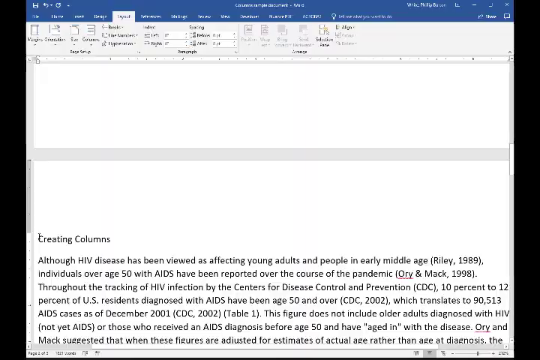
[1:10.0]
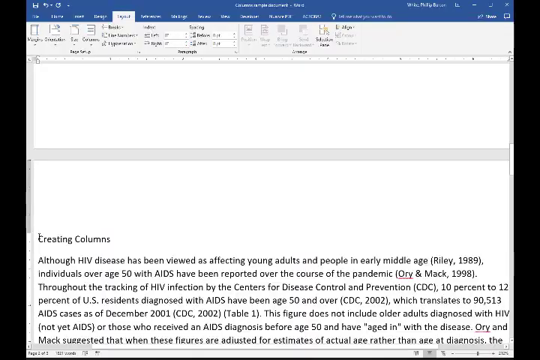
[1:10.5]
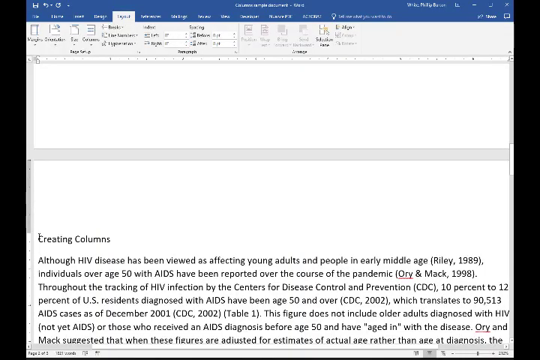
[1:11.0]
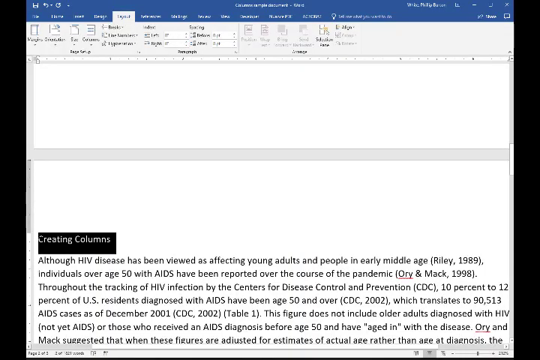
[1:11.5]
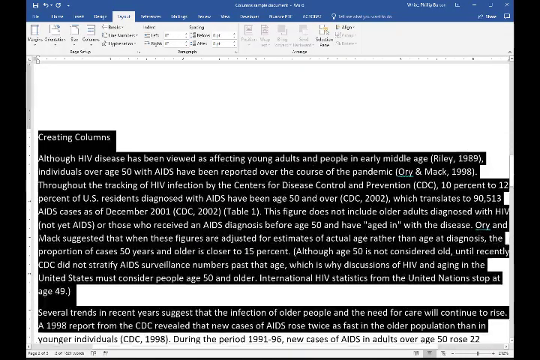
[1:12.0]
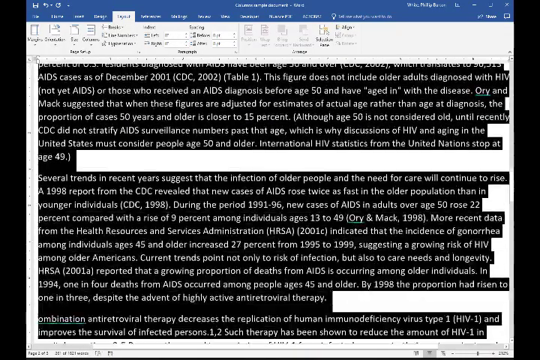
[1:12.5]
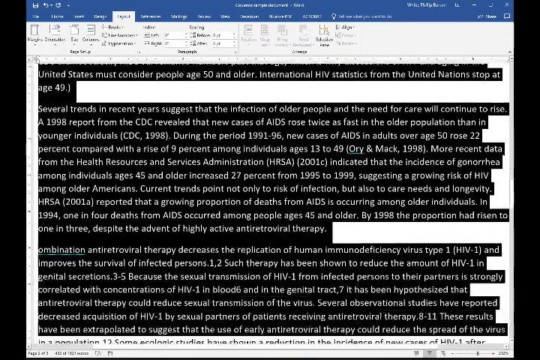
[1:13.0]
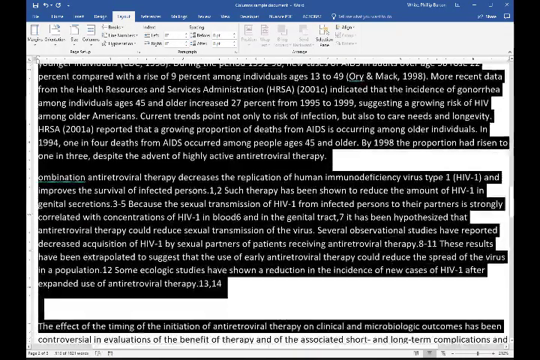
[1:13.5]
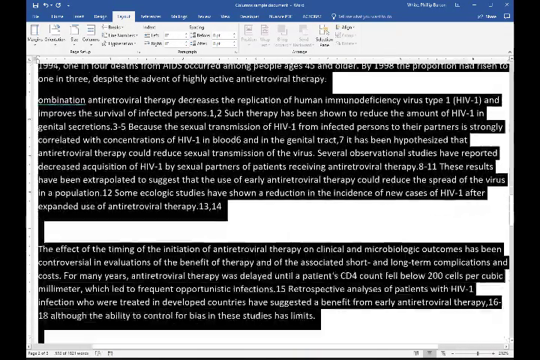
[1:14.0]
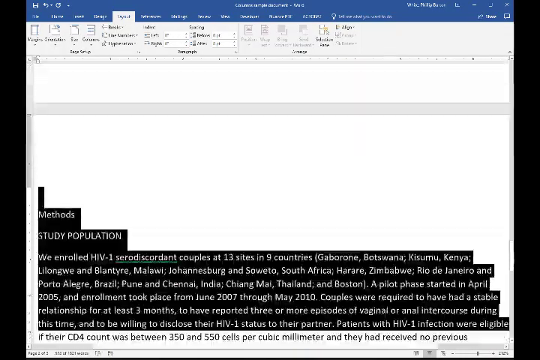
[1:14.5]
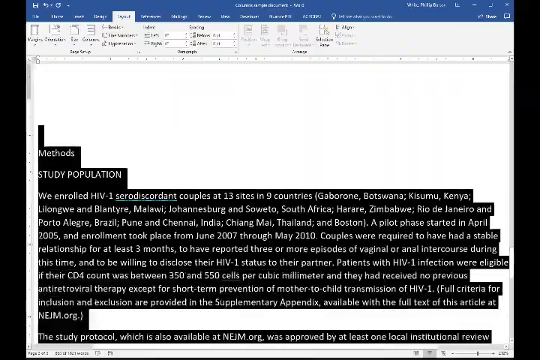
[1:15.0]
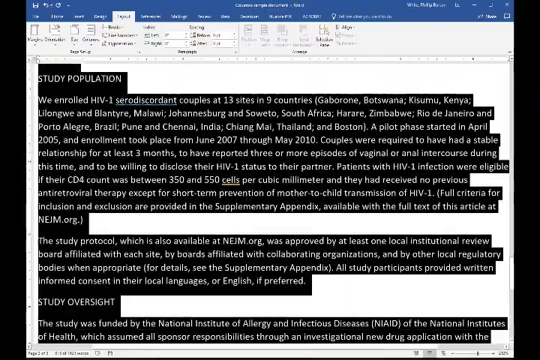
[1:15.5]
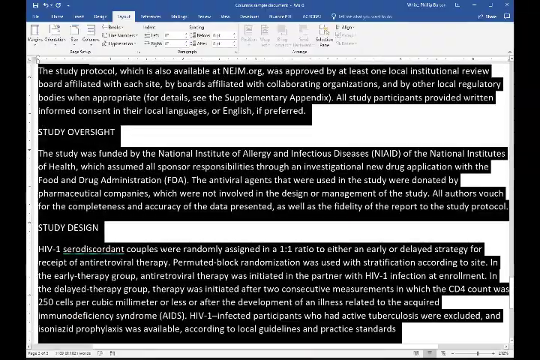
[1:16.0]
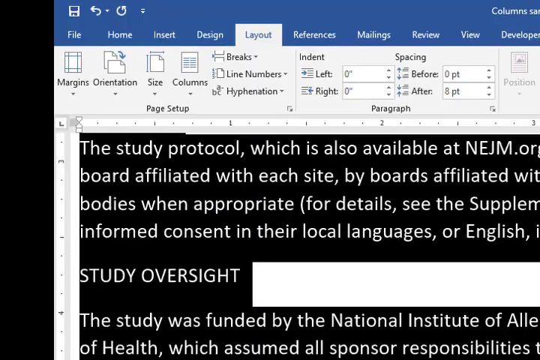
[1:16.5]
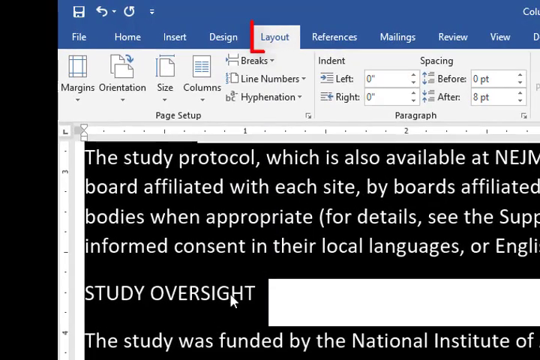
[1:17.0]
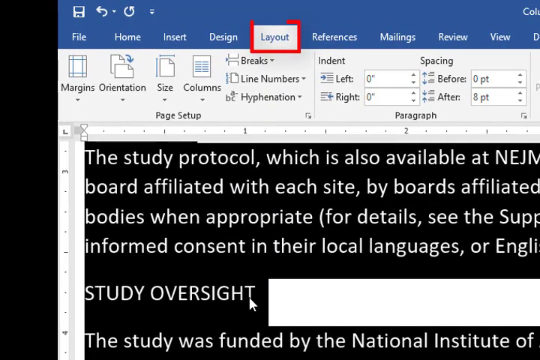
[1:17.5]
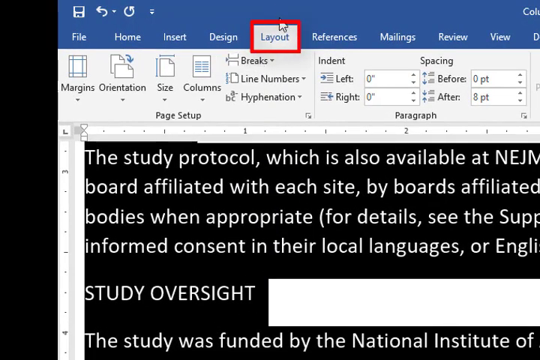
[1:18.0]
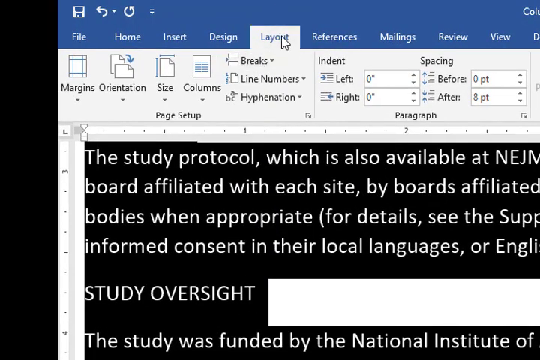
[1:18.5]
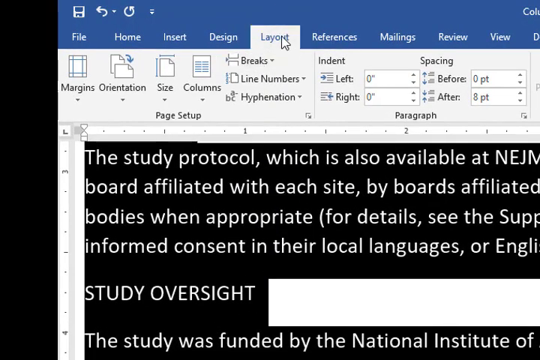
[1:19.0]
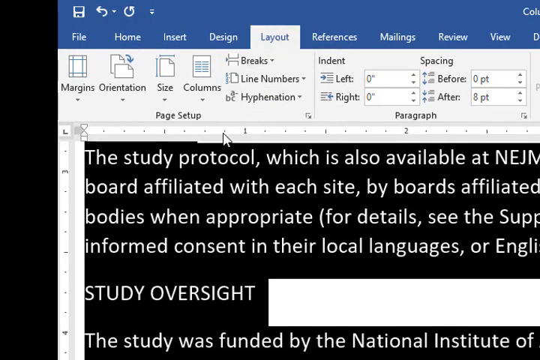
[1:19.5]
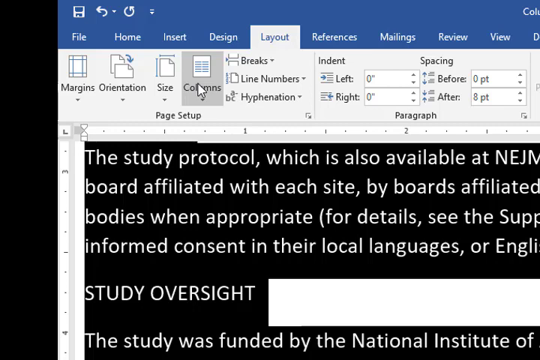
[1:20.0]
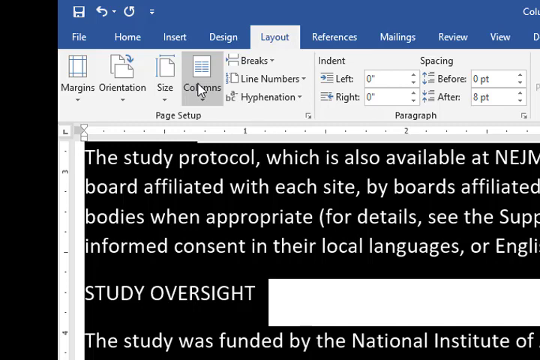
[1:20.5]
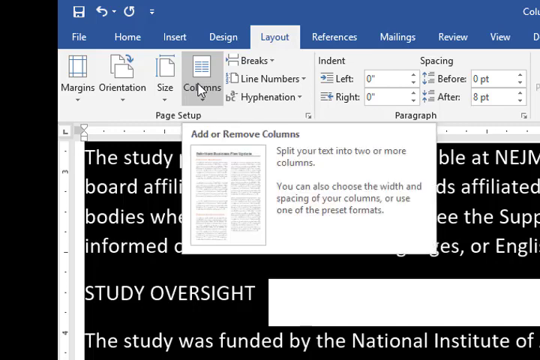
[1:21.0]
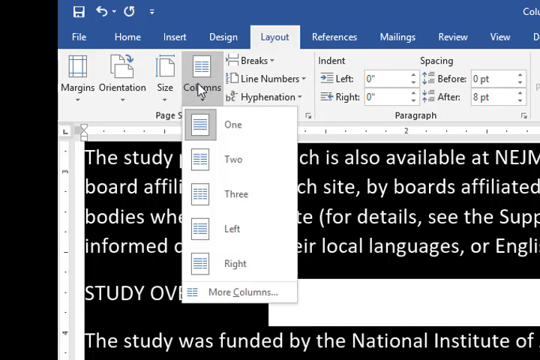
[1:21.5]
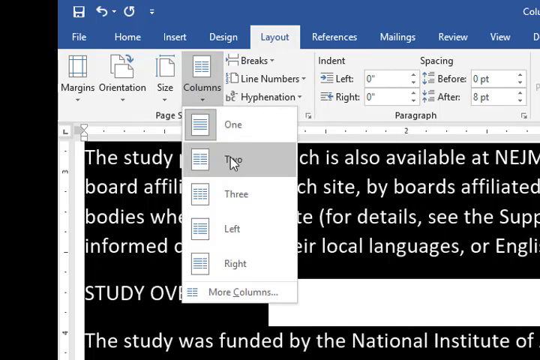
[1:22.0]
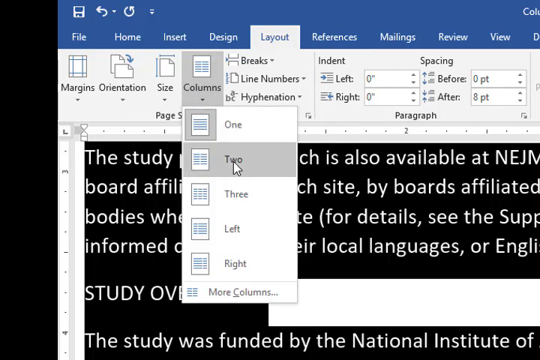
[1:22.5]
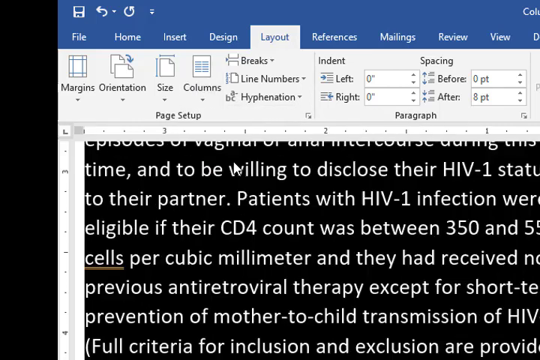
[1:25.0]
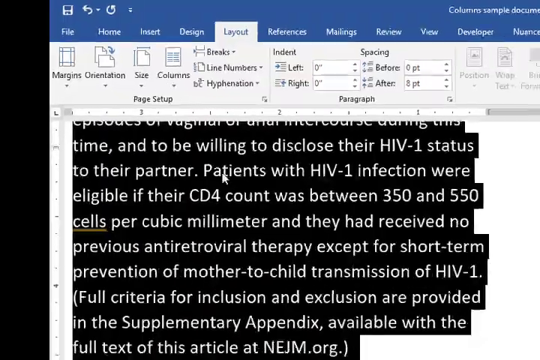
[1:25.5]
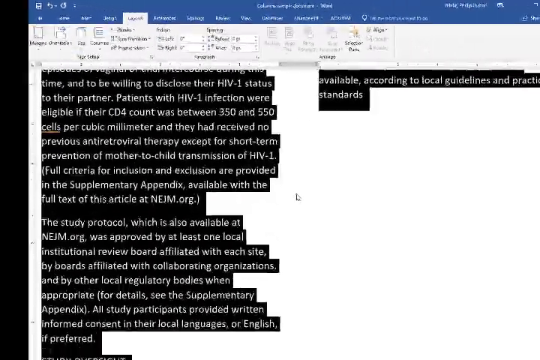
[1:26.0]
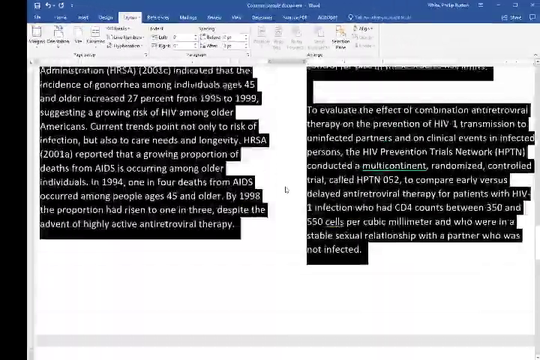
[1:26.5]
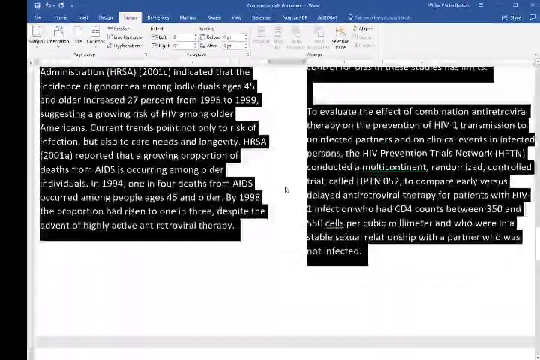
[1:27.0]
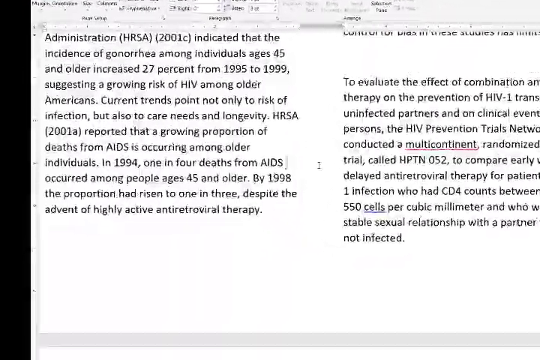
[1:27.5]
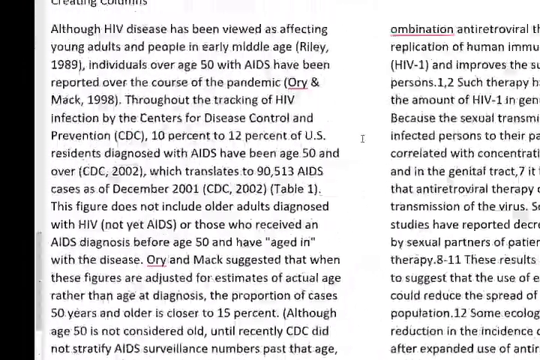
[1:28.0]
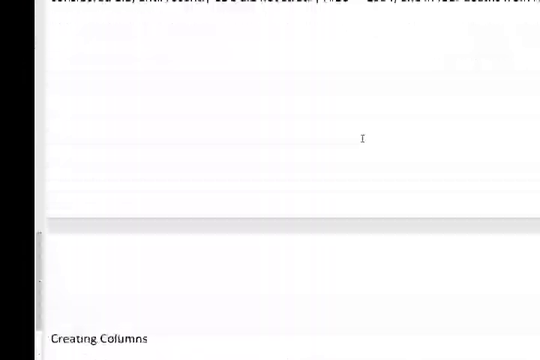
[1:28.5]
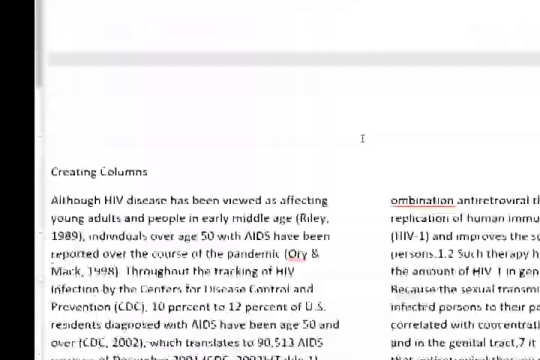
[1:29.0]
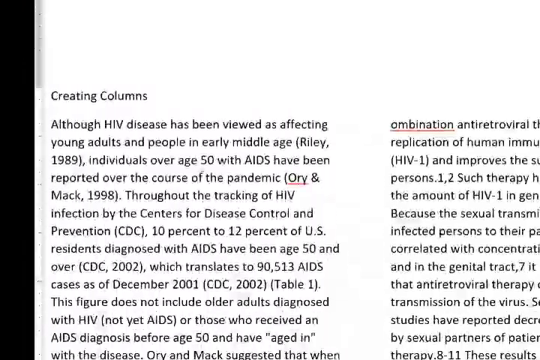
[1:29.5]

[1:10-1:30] A zoomed-out, full-screen screen-share view of the MS Word document appears, with the blue header at the top containing items like the file menu and a toolbar menu below it that is difficult to read at this resolution. There are black columns on the other side of the screen, letterboxing style. A page break runs across about the middle of the screen, followed by a section about creating columns; the text below looks like dummy text used for a paper about HIV. The mouse highlights this text, setting it in black. The view then zooms in, showing MS Word on the layout tab, with options beneath for margins, orientation, columns and so on. The zoomed-in black text toward the bottom of the selected section shows words such as "study overseas". The mouse cursor clicks on columns, opening a dropdown menu with one, two, three, left and right. The mouse hovers over two and clicks it, converting the text into a two-column layout. The mouse then scrolls up to the top of the document, and a red arrow appears briefly on the cursor.